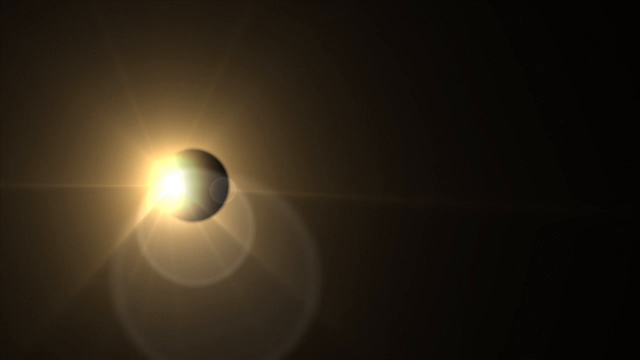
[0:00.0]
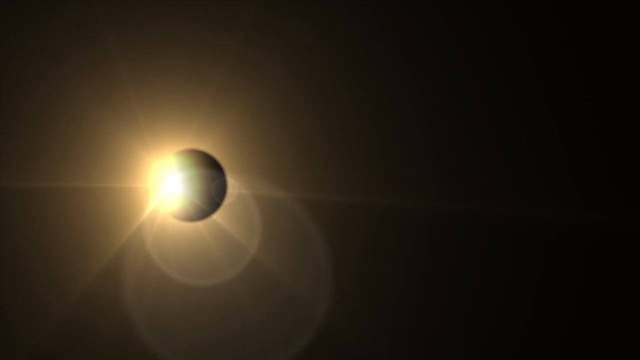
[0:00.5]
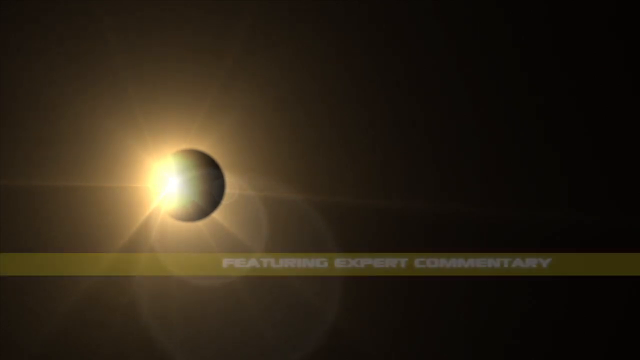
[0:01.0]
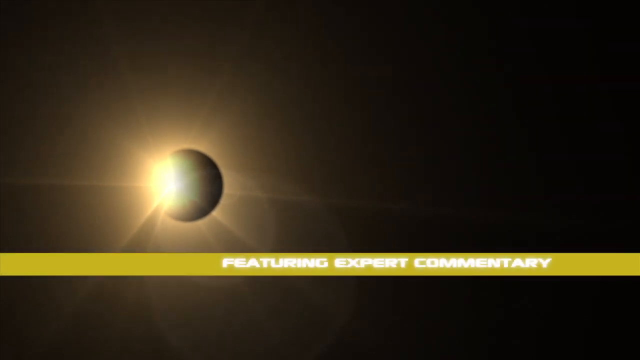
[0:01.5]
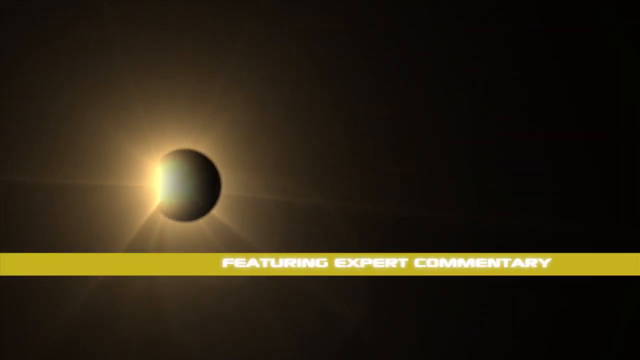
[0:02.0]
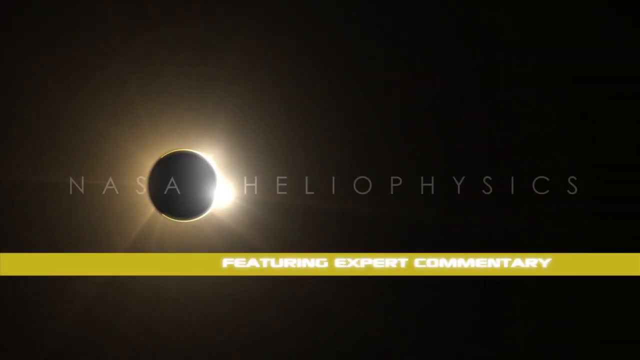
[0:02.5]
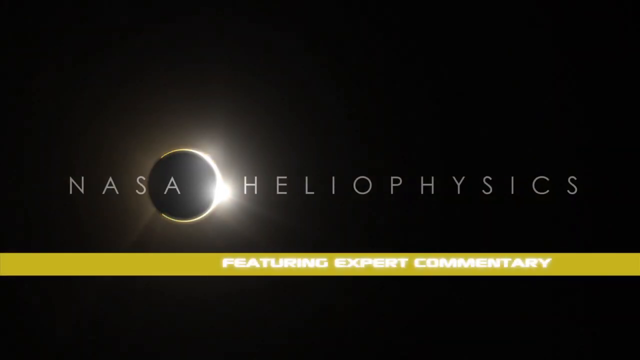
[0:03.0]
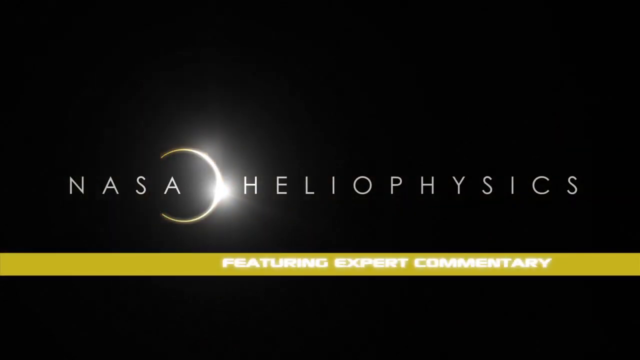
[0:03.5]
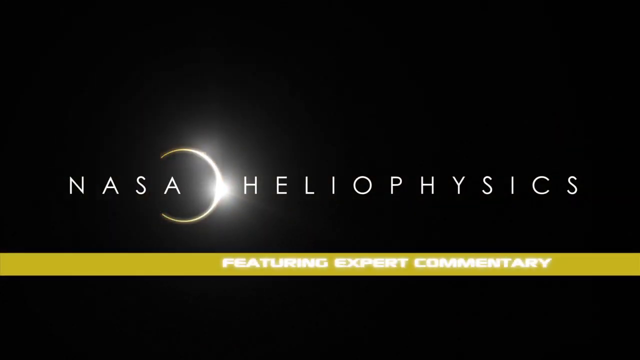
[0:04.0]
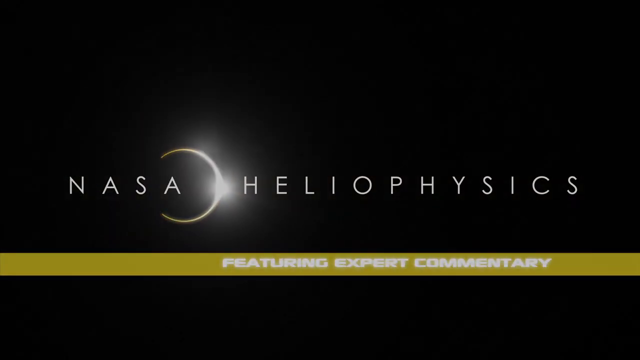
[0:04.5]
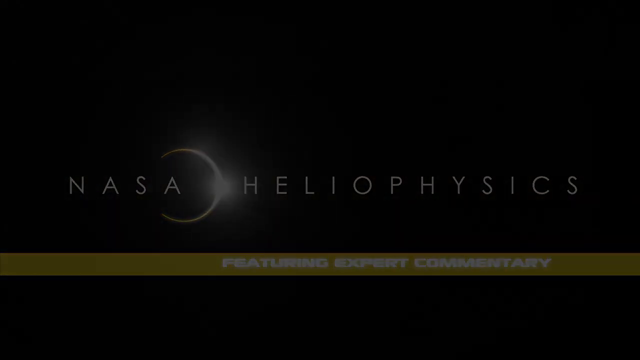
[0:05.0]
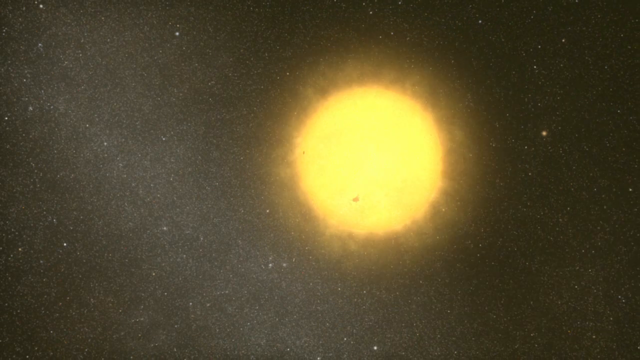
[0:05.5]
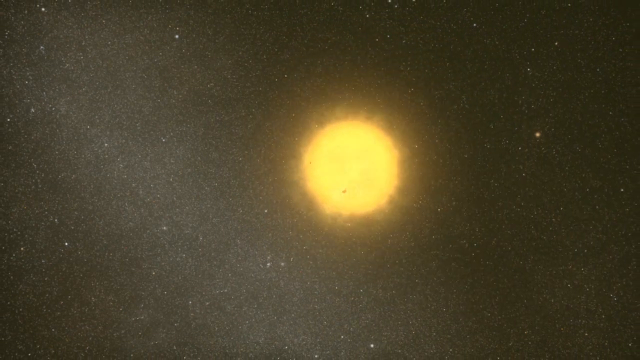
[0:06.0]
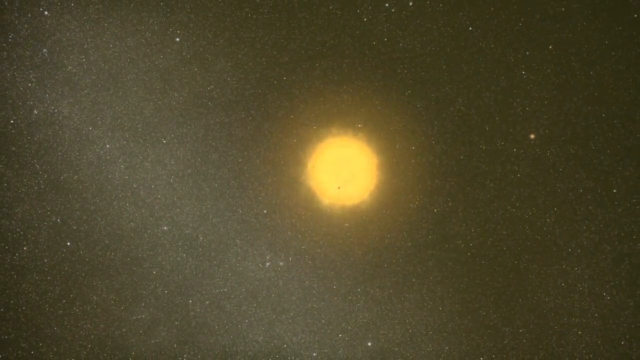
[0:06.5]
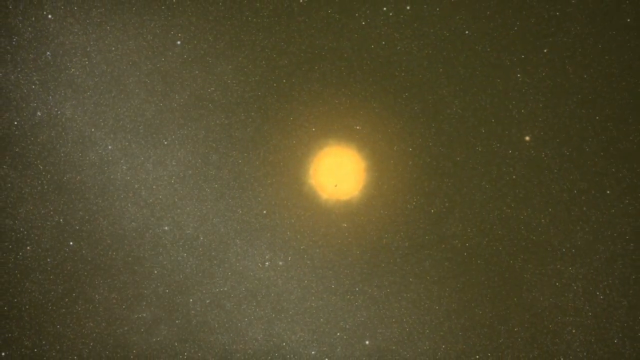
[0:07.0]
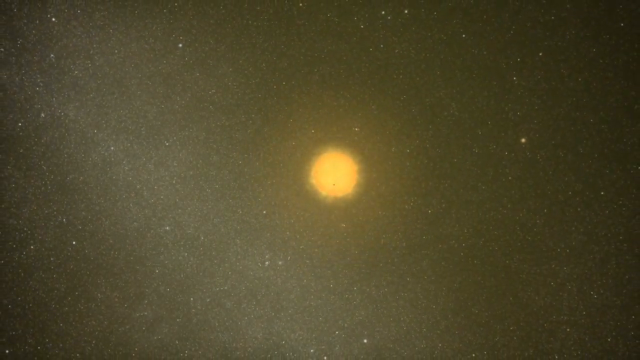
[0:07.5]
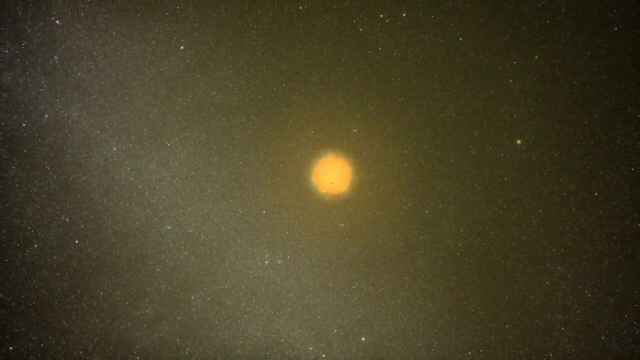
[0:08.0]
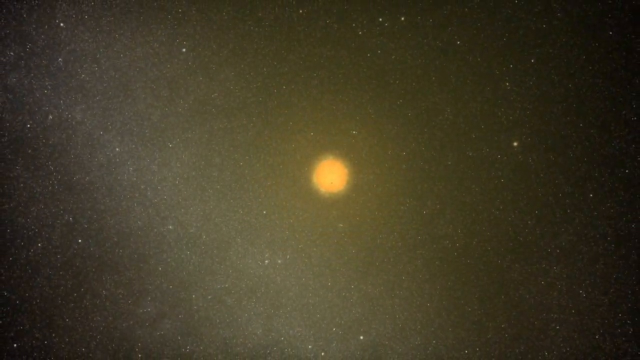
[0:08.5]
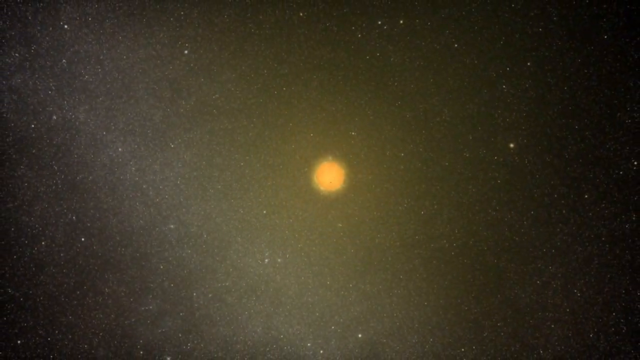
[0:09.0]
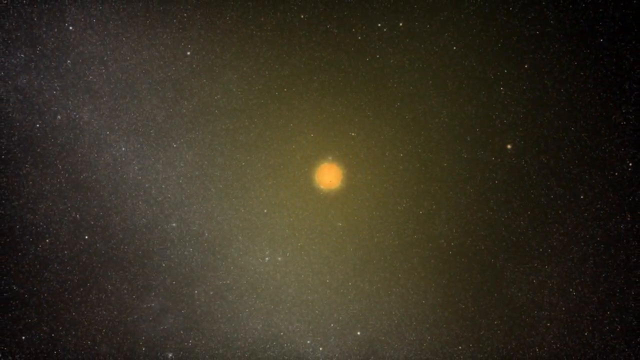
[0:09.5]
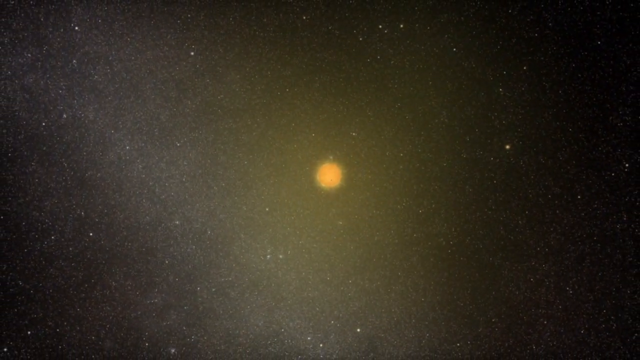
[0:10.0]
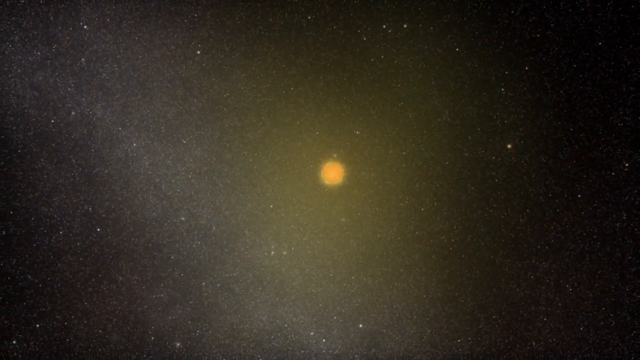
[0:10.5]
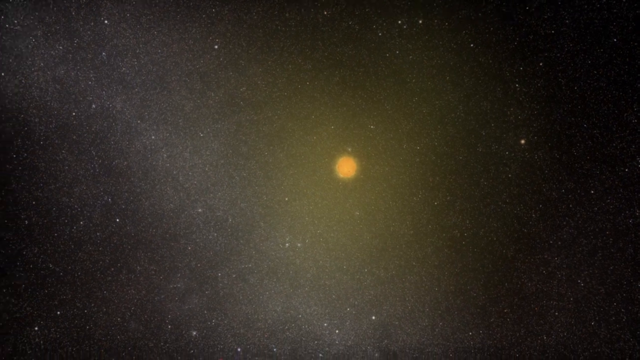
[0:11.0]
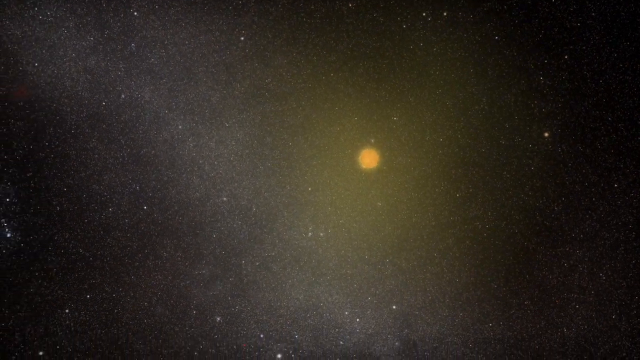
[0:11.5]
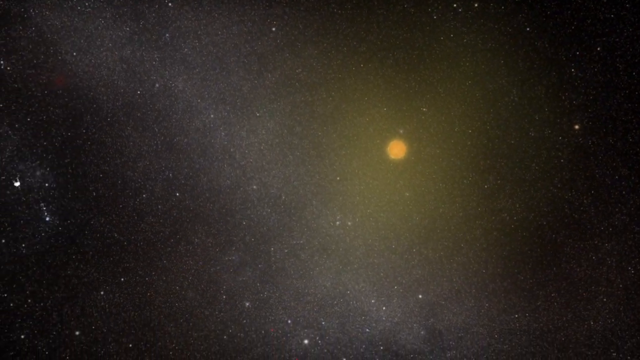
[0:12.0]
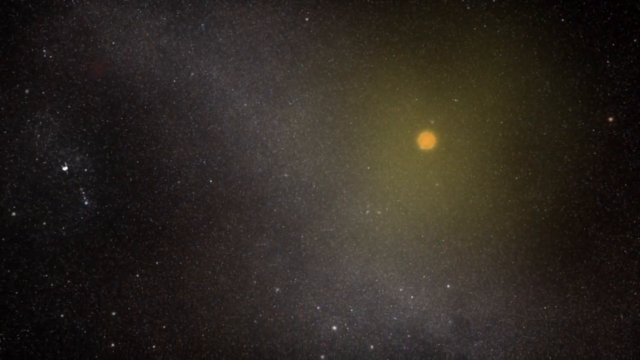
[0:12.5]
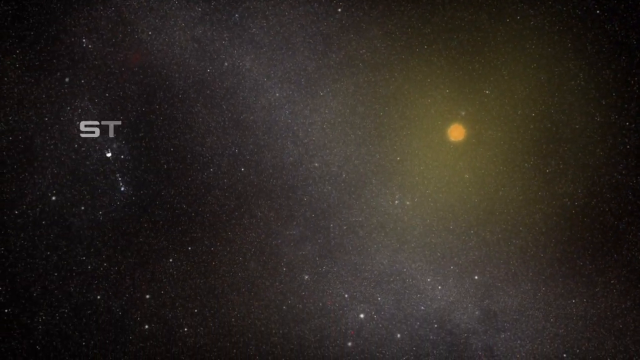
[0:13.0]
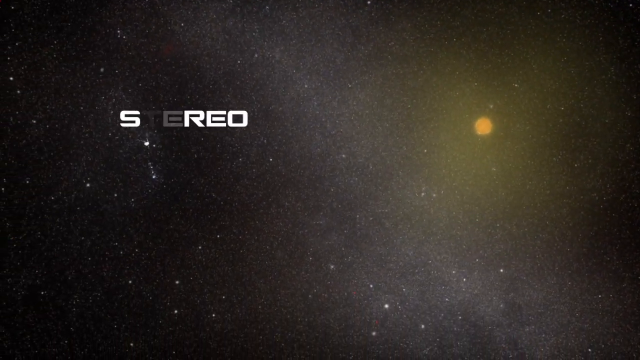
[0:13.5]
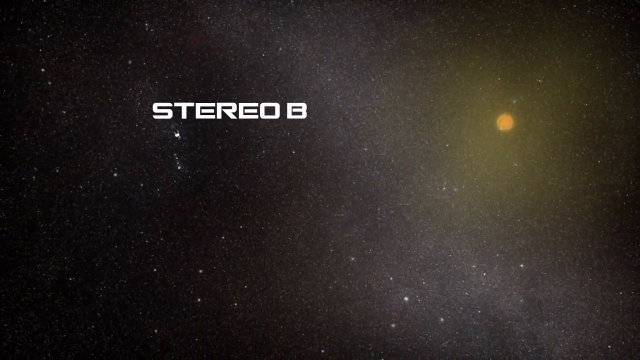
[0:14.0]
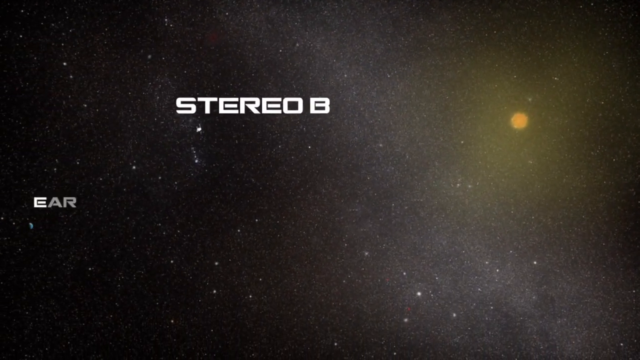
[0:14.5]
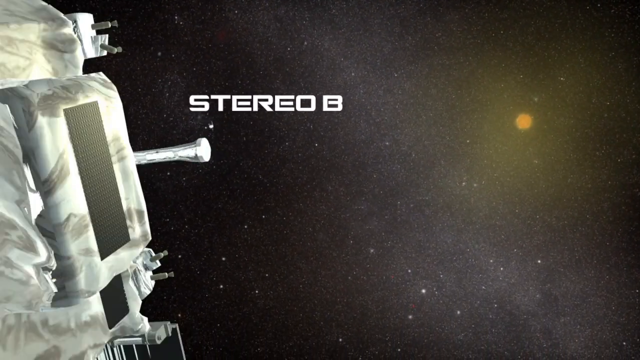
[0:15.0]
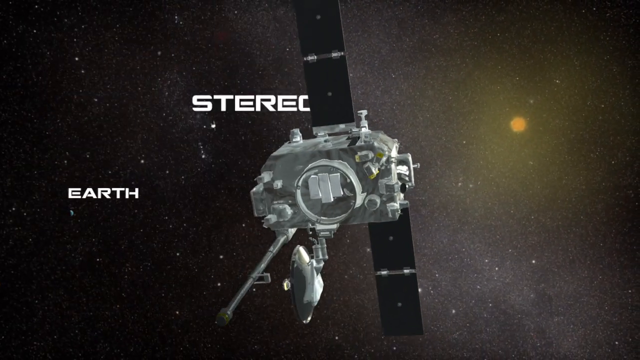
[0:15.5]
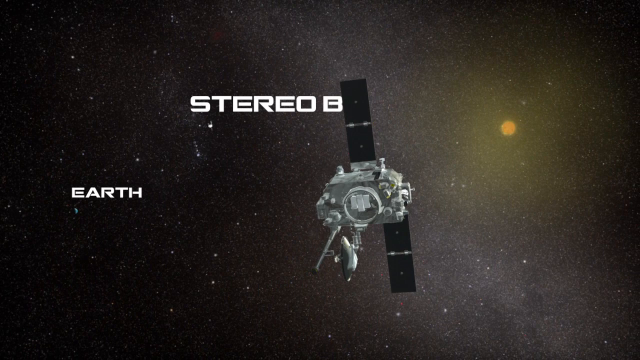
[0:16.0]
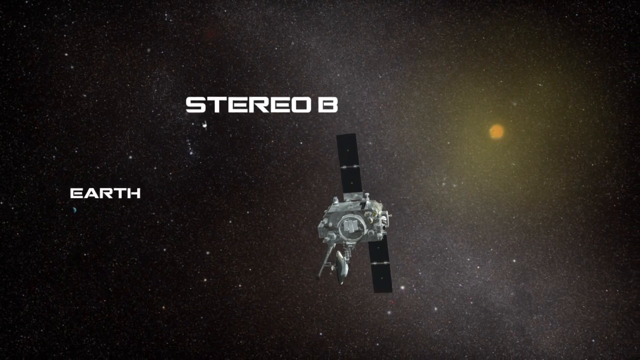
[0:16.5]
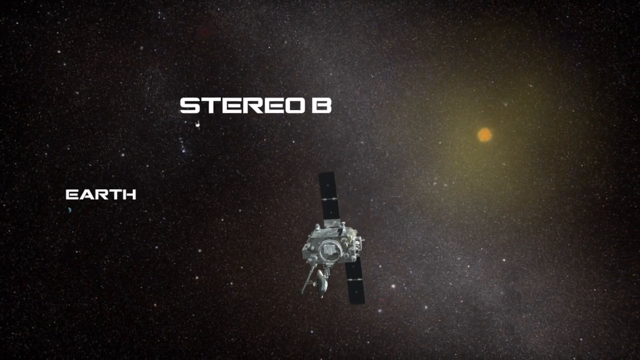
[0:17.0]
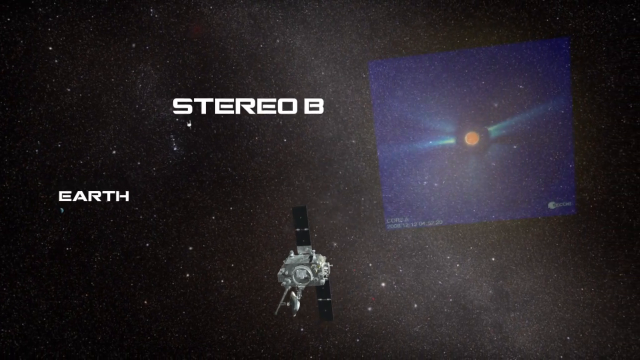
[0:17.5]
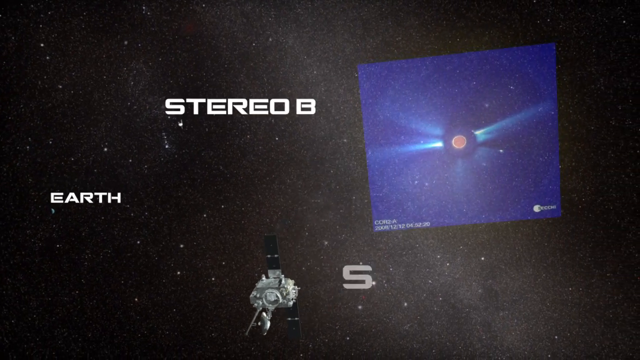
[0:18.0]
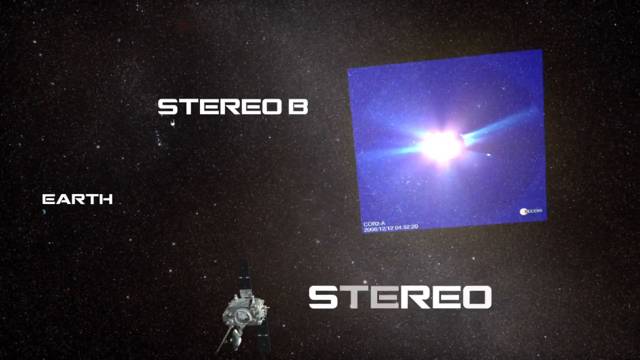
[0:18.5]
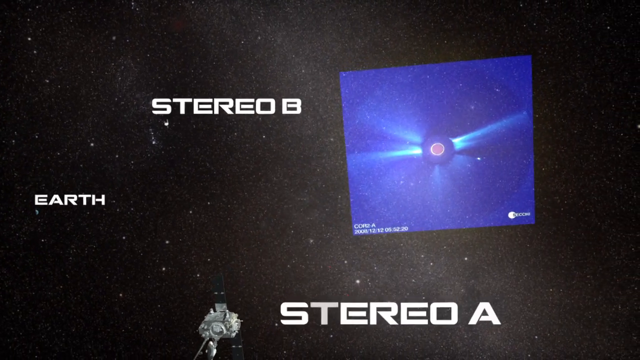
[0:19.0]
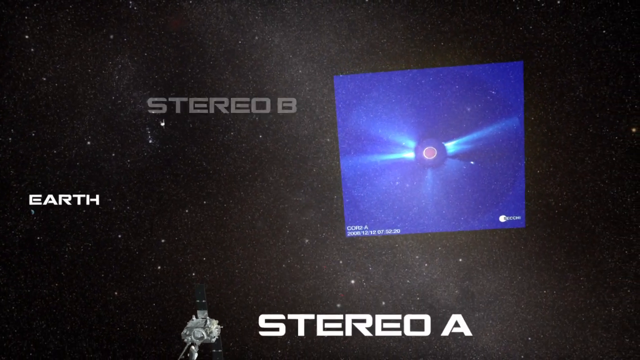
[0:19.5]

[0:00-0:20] A 3D rendering shows a planet in space blocking the sun; the sun slowly moves from left to right until an eclipse is visible. A title card then appears reading "NASA Heliophysics featuring expert commentary." The screen fades to black, and a 3D rendition of the sun appears in the center. The view quickly zooms out away from the sun, showing it in the distance against a black background covered with white dots, stars and planets. With the sun now in the top right corner, a satellite in space appears with a white label reading "Stereo B," followed by a planet labeled in white text "Earth." A large satellite with four solar panels, two on each side, comes in from off screen on the left. The view slowly pans downwards, and text appears next to it reading "Stereo A." A large blue rectangular screen appears in space around the sun, with blue waves coming from the sun; the text on it is illegible and blurry.